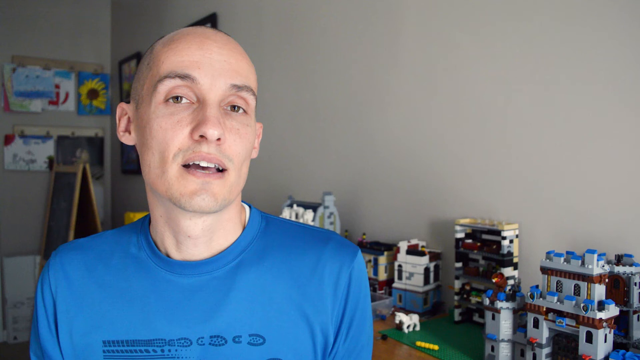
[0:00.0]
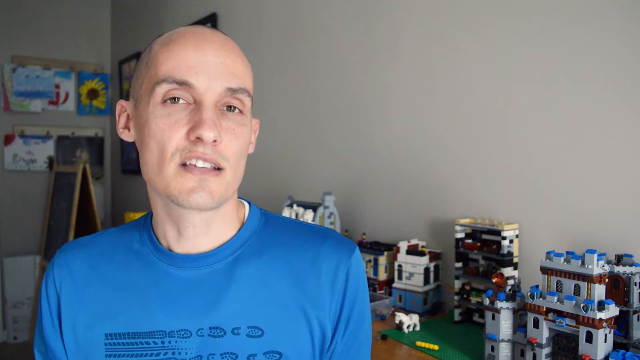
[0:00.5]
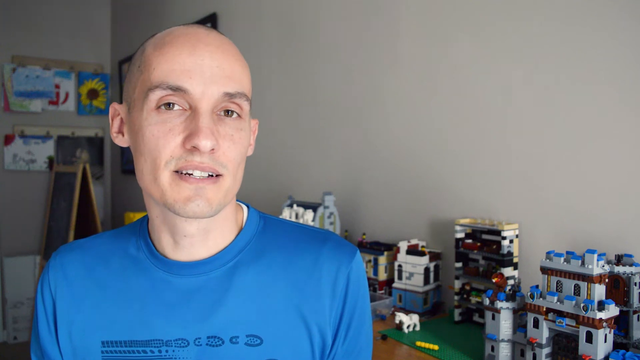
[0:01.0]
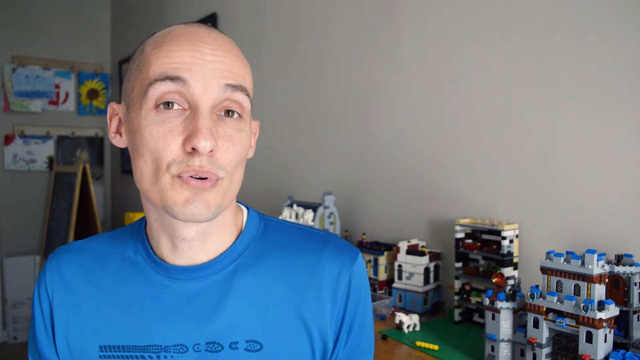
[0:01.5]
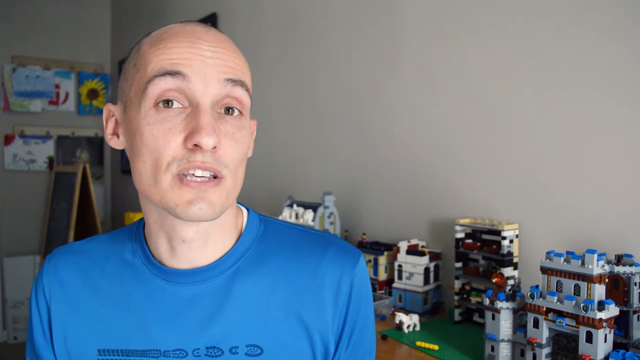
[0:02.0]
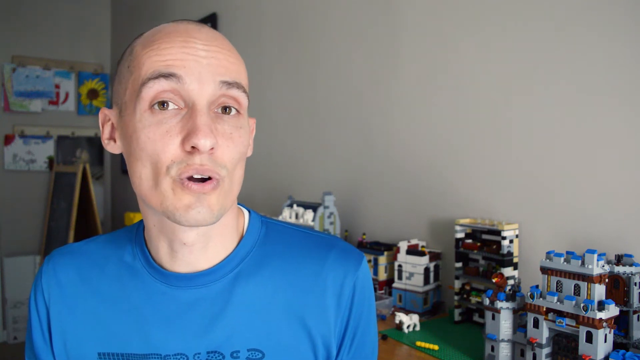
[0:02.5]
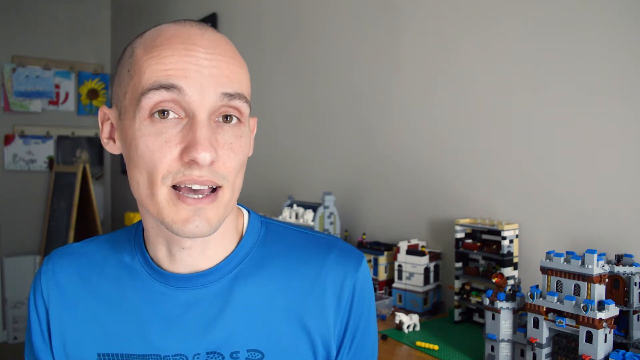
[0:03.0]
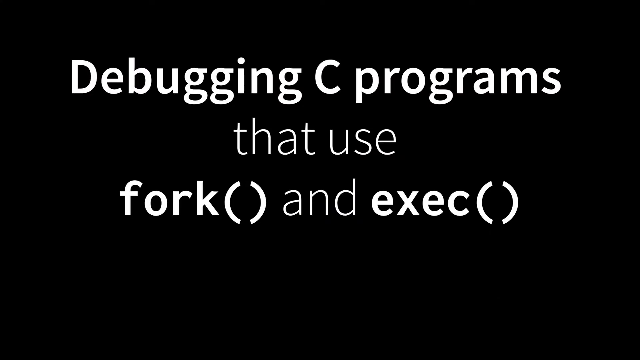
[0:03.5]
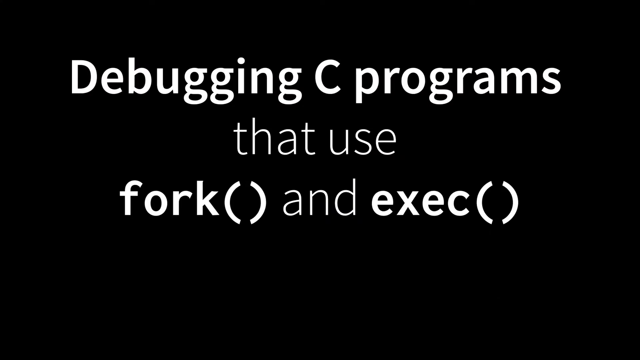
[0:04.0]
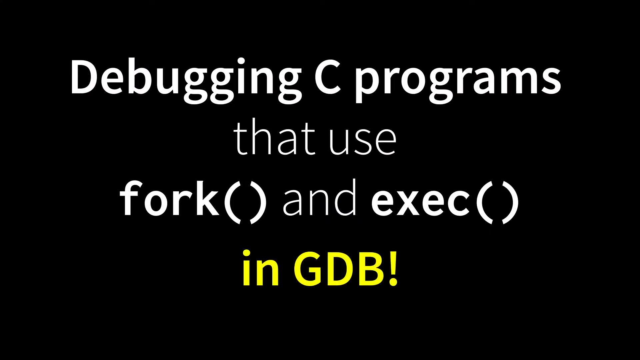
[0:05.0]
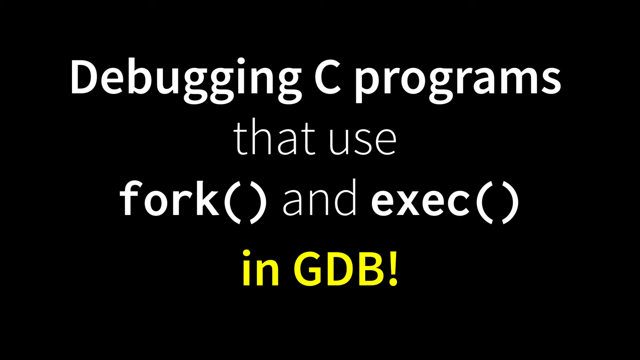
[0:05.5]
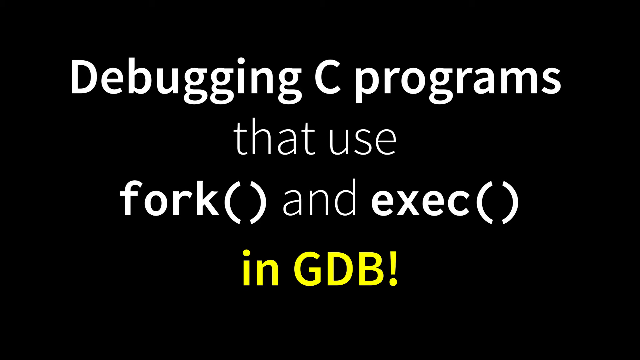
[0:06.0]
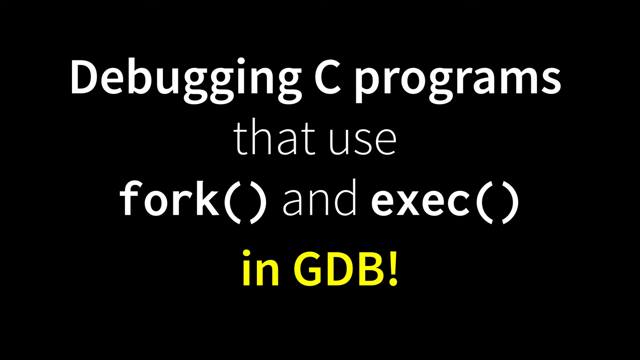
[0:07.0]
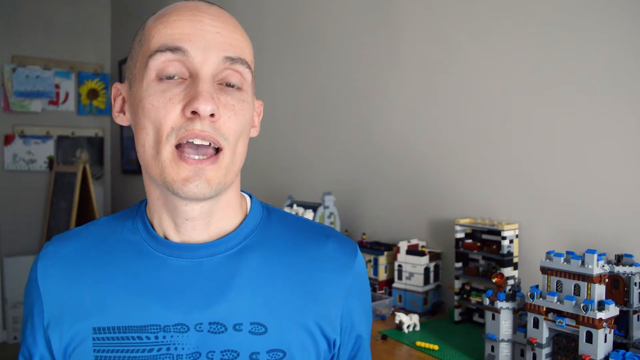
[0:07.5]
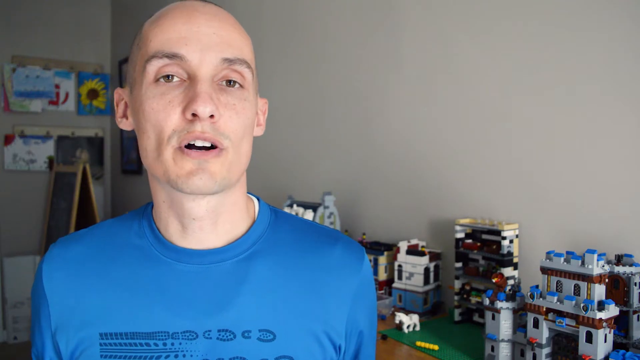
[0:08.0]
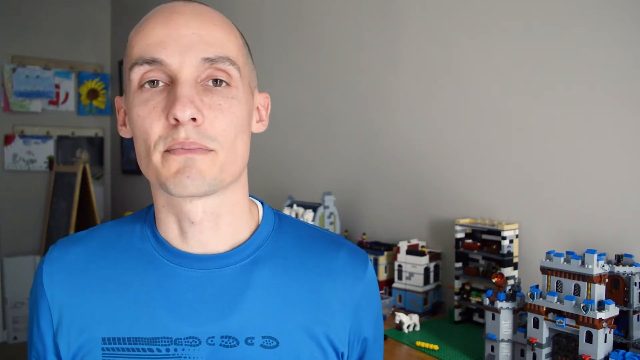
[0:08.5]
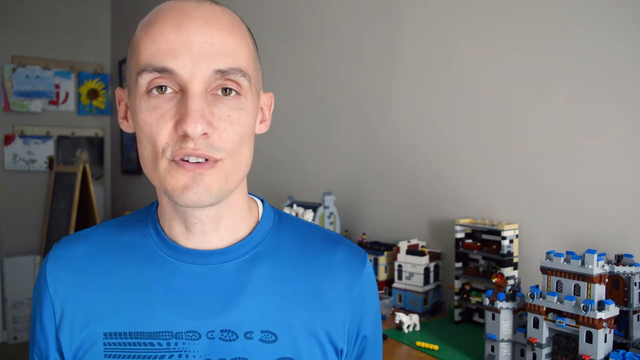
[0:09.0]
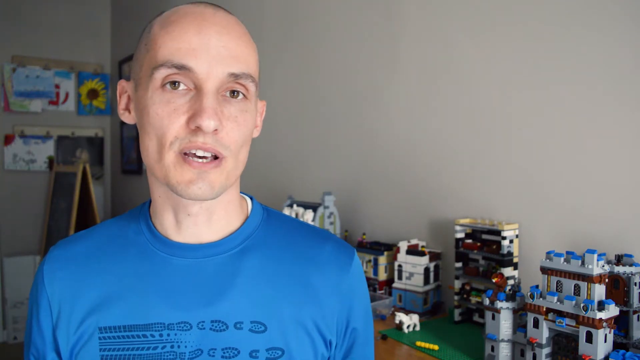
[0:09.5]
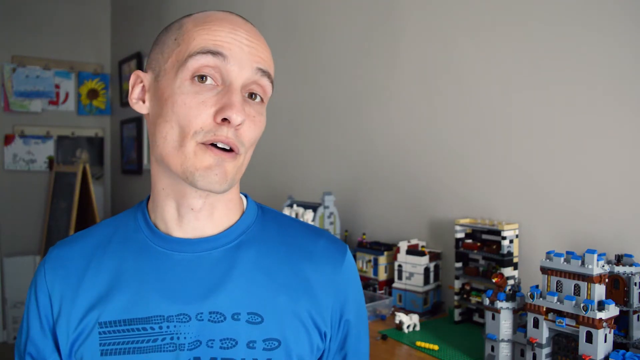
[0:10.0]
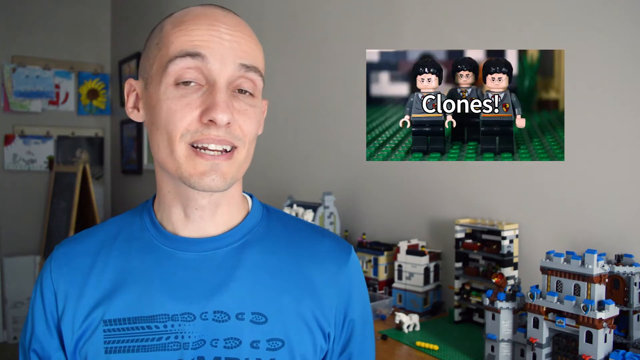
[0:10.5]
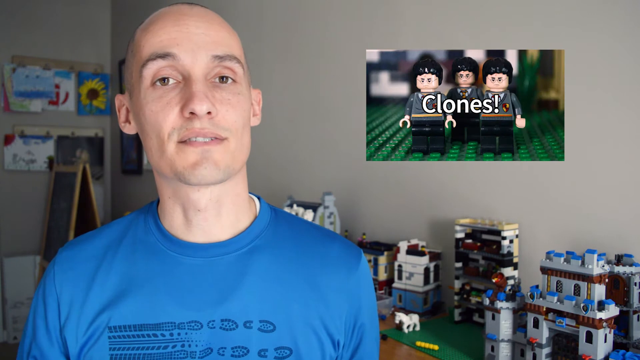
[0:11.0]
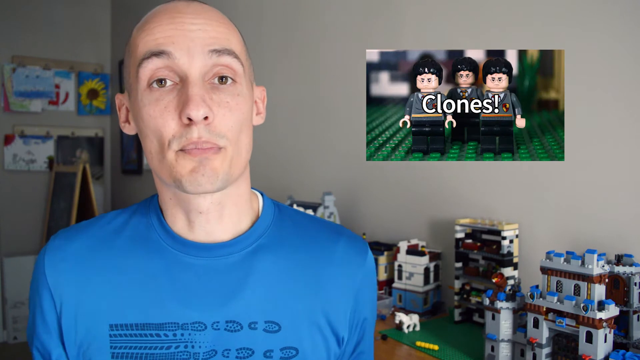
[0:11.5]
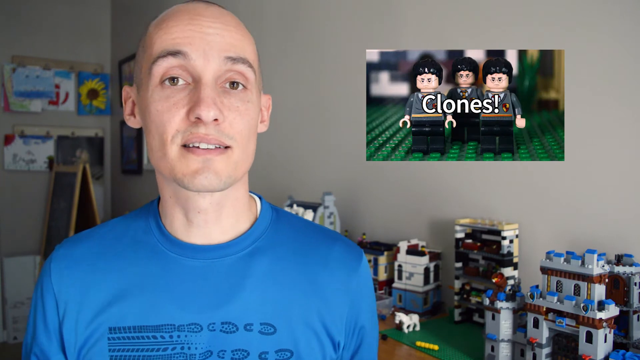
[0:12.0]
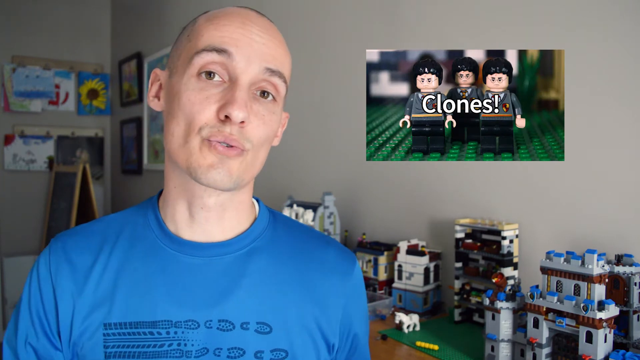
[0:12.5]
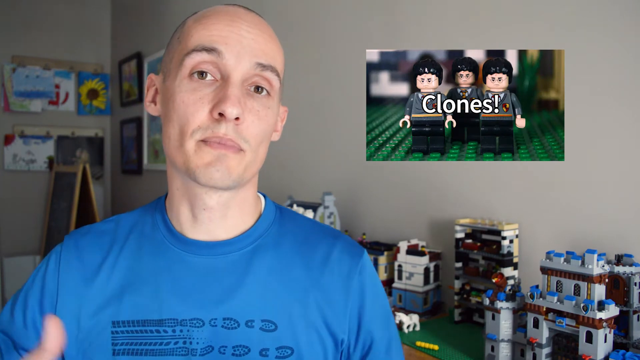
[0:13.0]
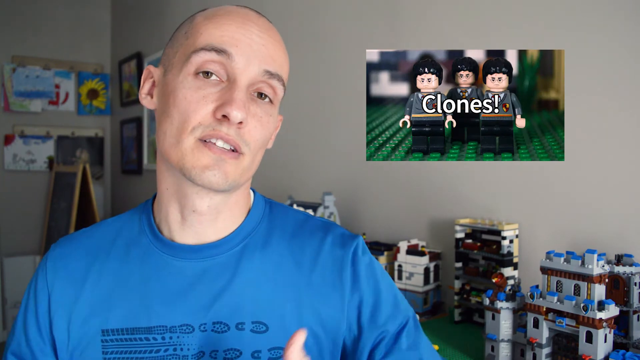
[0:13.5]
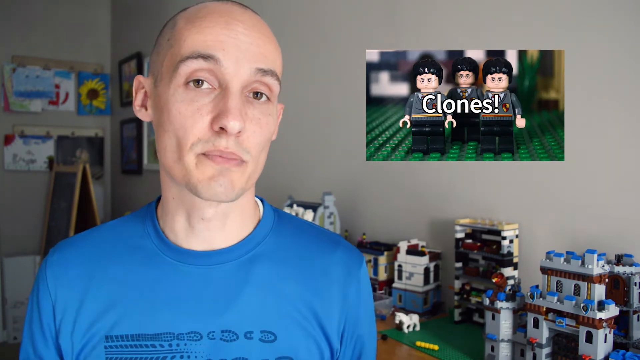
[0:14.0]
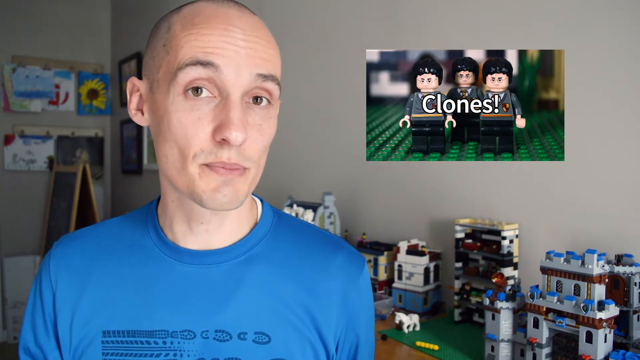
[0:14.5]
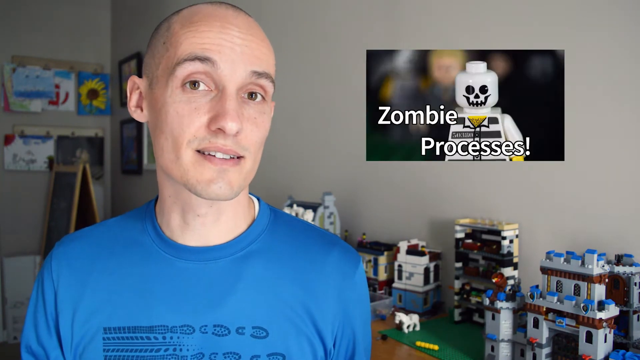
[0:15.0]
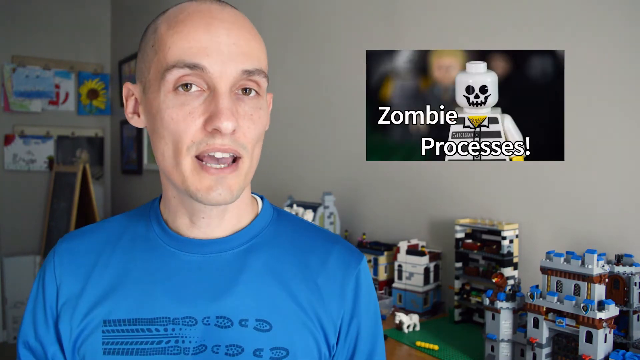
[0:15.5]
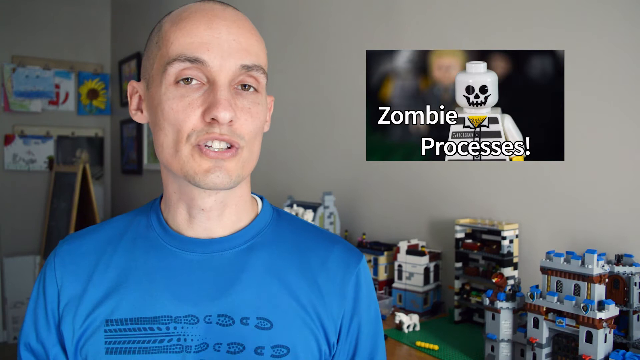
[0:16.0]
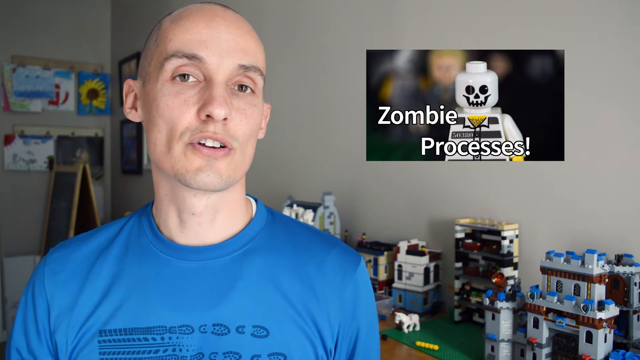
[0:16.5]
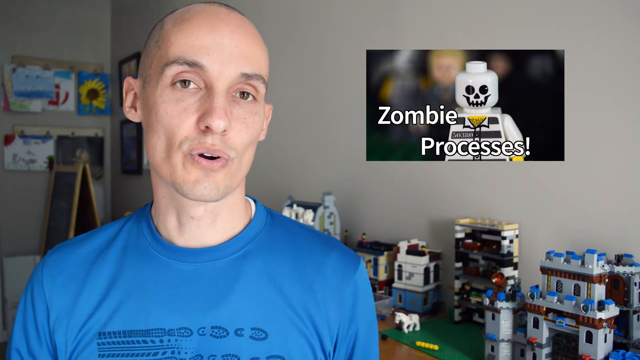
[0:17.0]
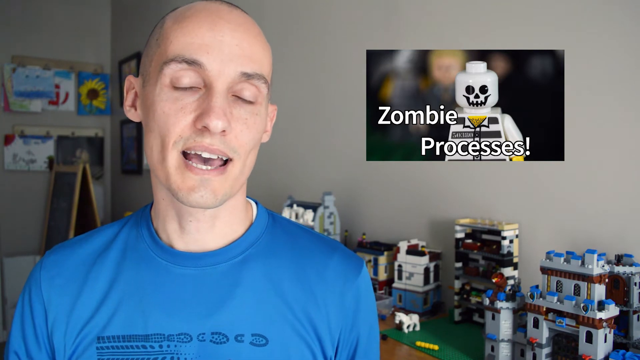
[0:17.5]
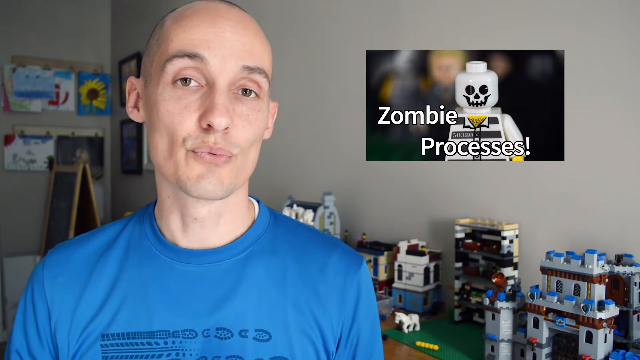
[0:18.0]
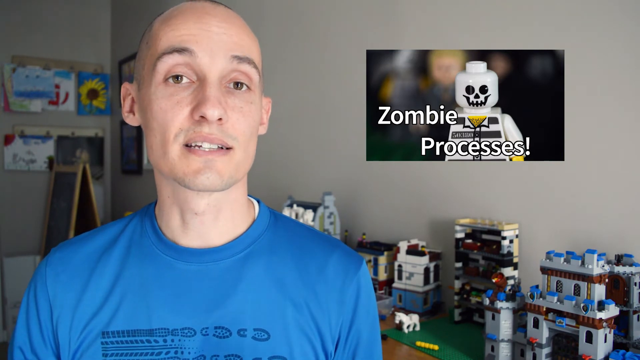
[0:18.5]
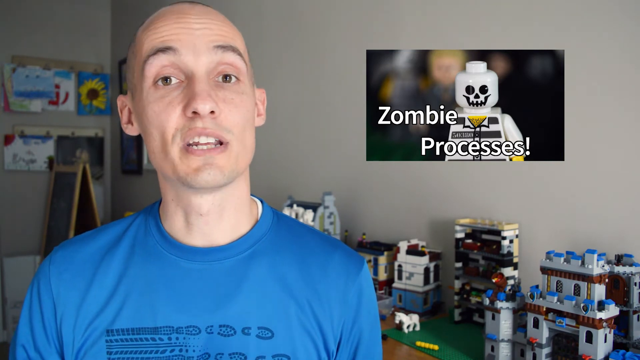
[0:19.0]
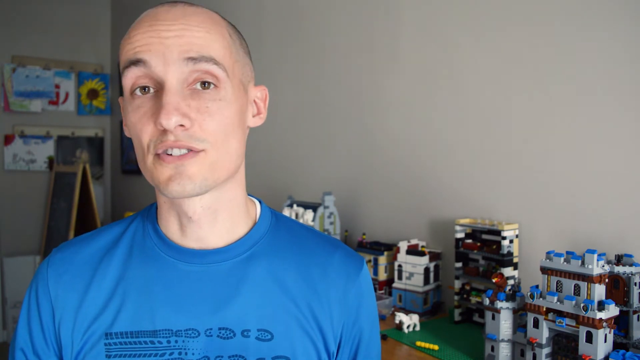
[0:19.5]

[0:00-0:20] A man of white descent wearing a blue shirt talks to the camera. On the left side of the frame there seem to be pictures related to small kids, and on the right side Lego cubes or Lego bars have been built into small house-like structures on a table. At the beginning, a title appears: "debugging C programs that use fork and exec in GDB!" As the video continues, GIF-like pictures keep popping up on the right side. The first reads "clones!", and while the man keeps talking another pops up reading "zombie processes". The man seems to be explaining concepts.